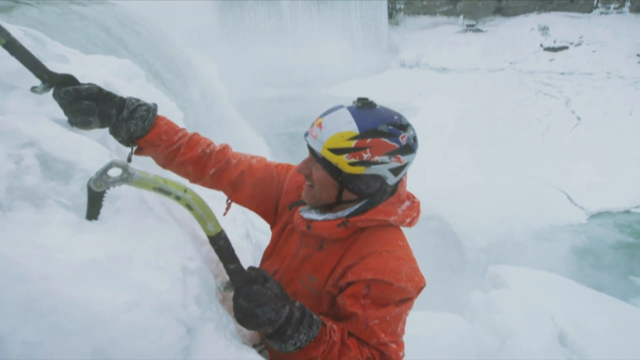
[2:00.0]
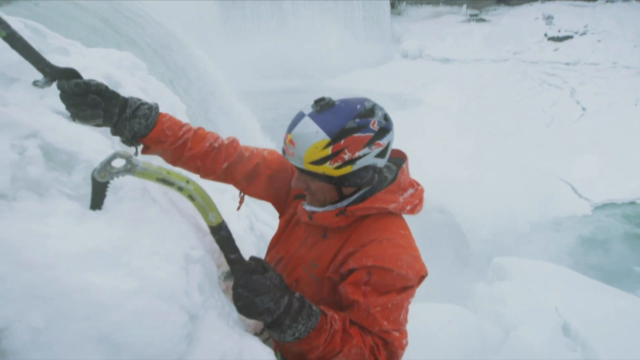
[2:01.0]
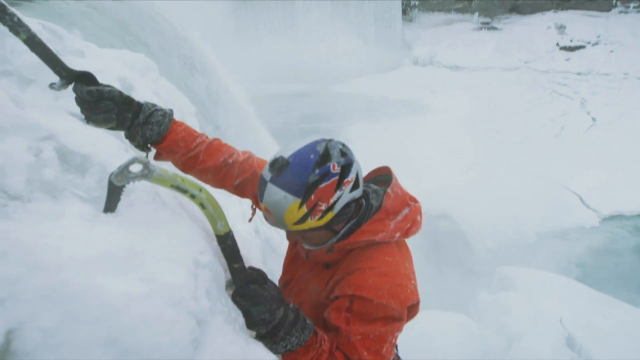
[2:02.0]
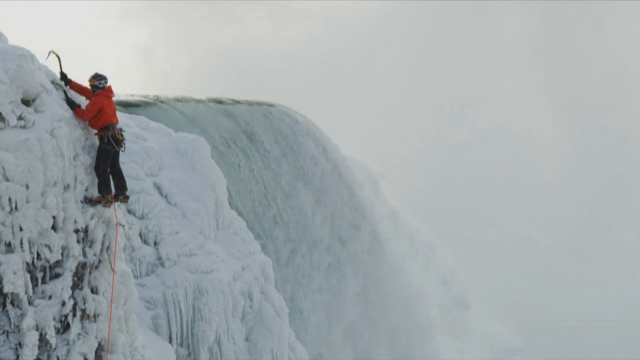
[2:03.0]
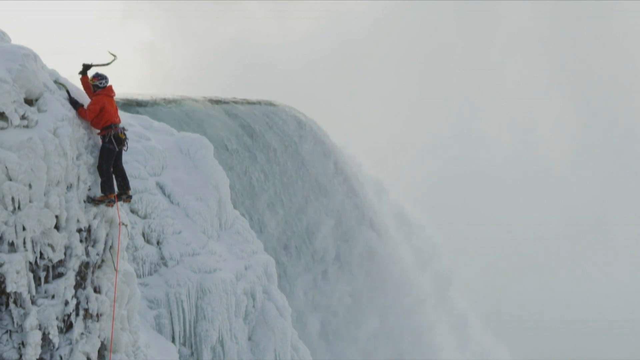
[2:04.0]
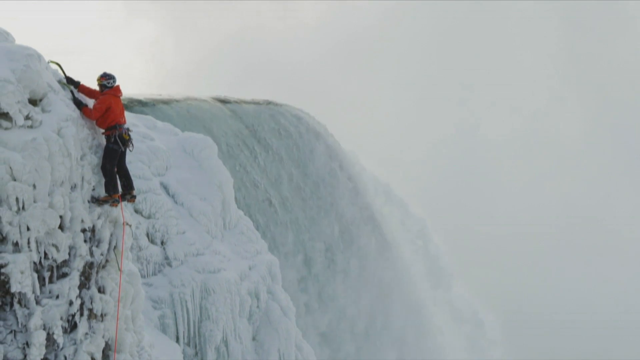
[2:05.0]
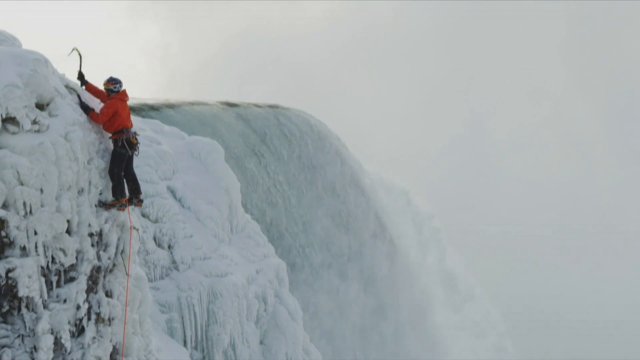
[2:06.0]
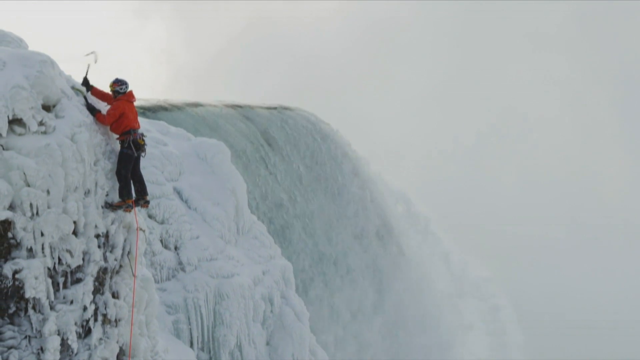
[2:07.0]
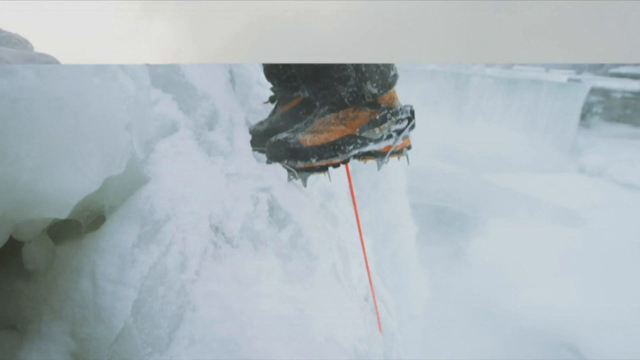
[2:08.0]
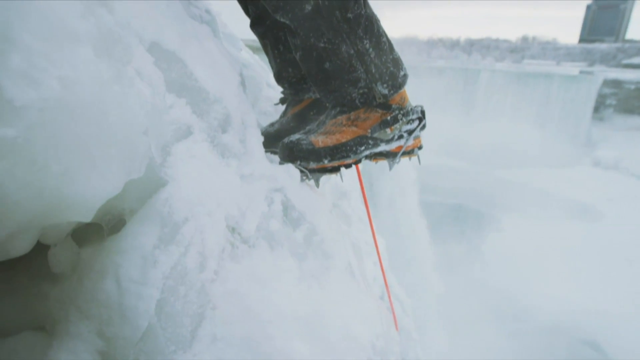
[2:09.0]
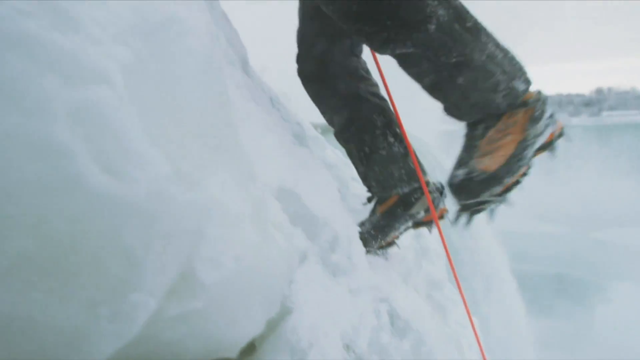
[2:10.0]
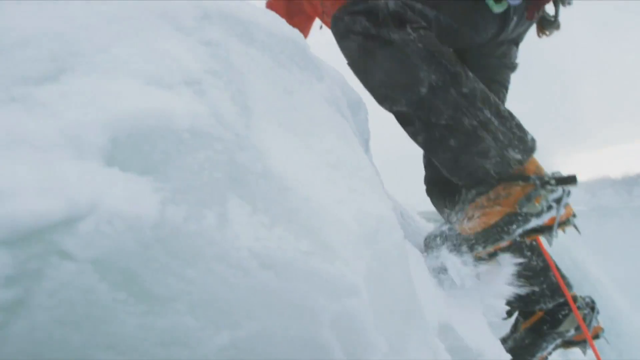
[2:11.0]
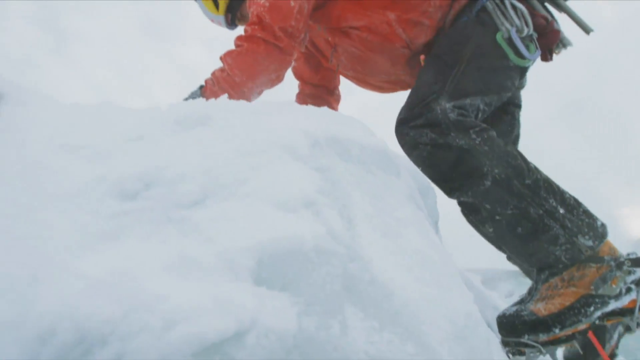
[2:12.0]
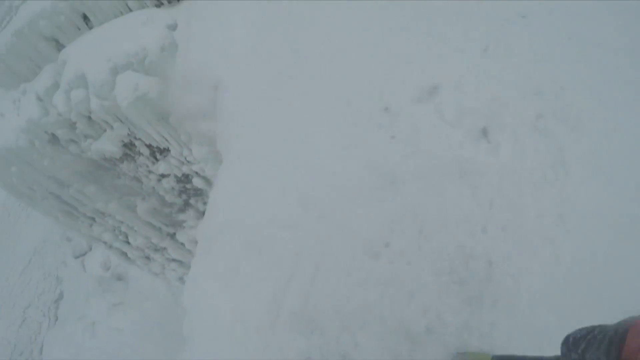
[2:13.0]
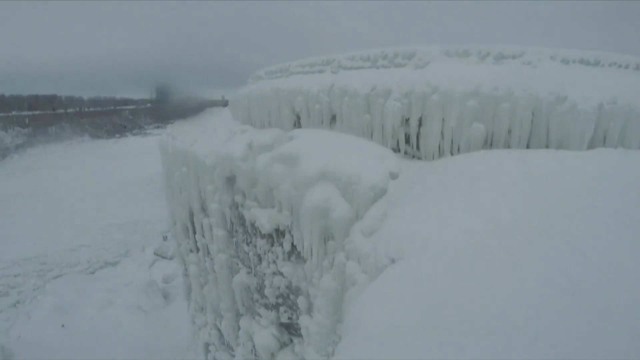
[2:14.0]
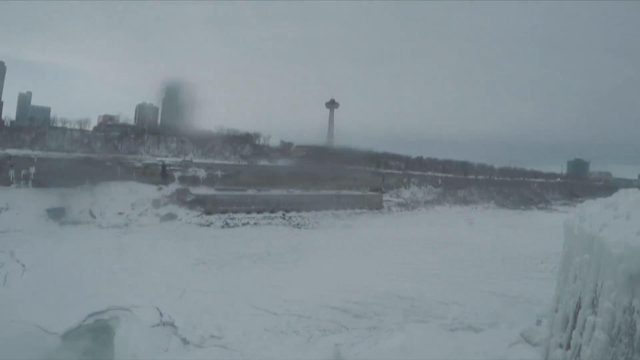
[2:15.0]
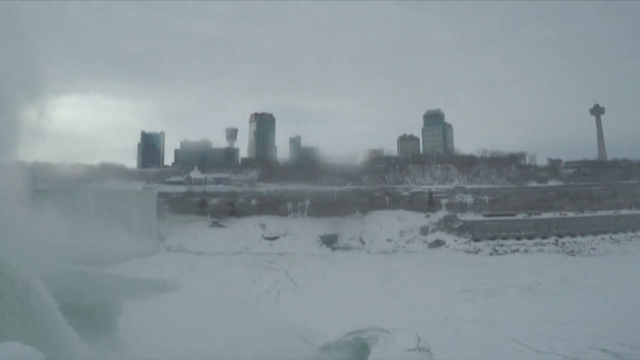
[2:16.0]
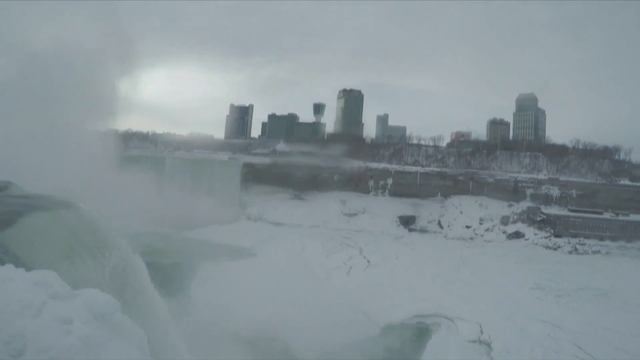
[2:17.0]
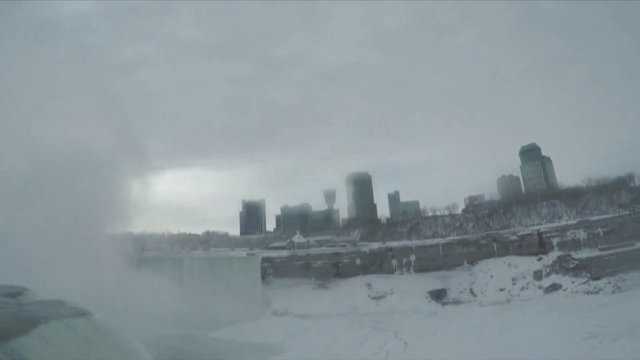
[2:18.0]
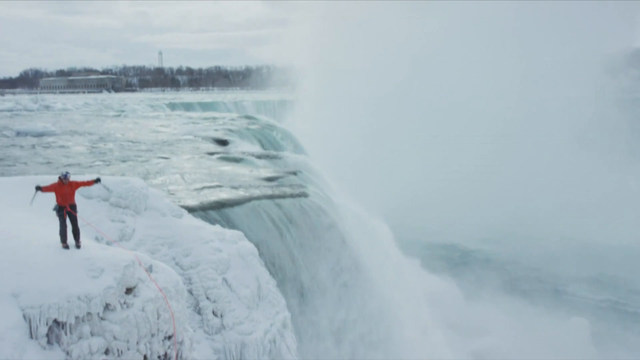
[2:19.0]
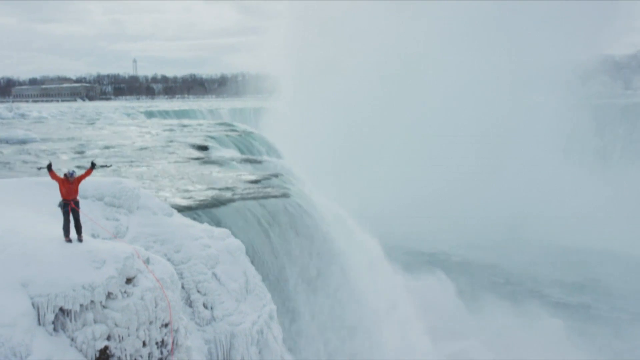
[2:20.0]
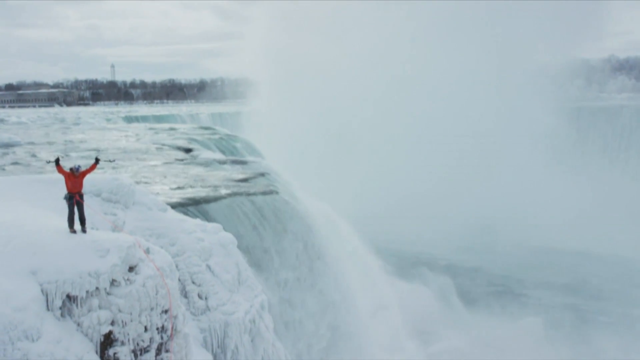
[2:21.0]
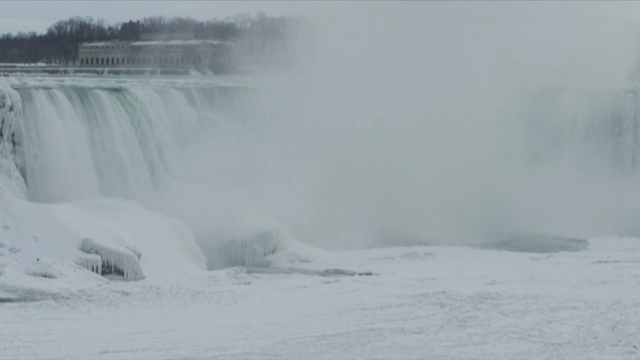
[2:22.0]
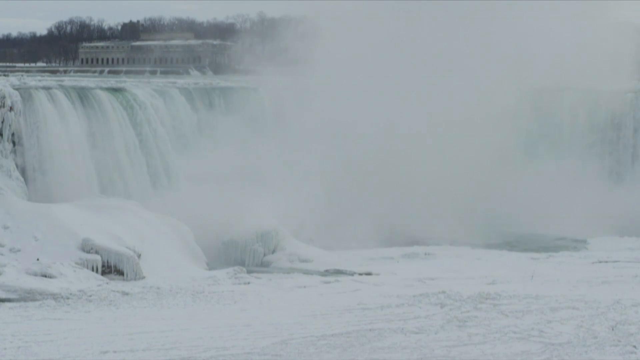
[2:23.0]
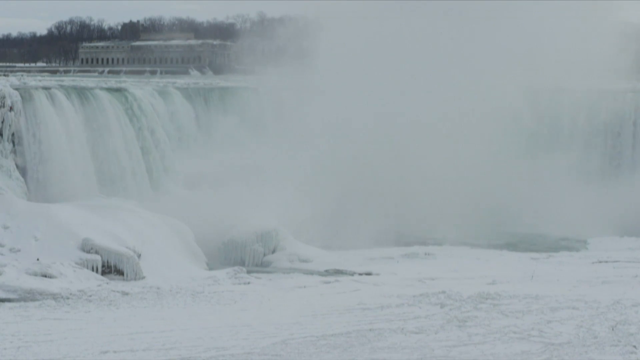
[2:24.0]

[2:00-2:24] The man seems to be very near the top of the falls. The peak of the falls is visible to the right, with the water coming down. A close-up of his footwear and gear shows what seem to be some sort of spikes on the toes. A skyline of the Canadian side of Niagara Falls follows, including a distinctive tower on the right side. Everything there looks very gray. Some of the top of the falls is visible to the left, and the next image shows the falls at the center with a hint of green-gray color. The climber is then shown in his red jacket and helmet, seemingly Will, raising each hand high in a sort of victory or celebratory pose, having reached the top of the falls. He holds his hooks up as he makes this motion.